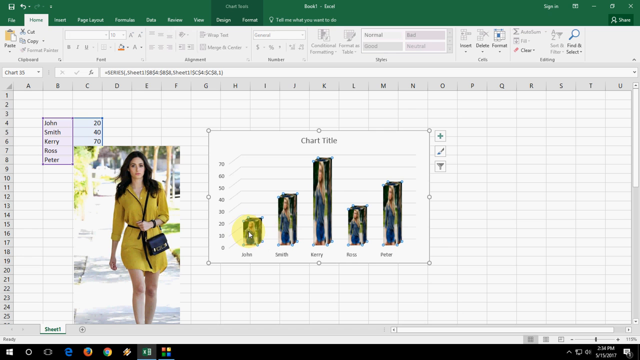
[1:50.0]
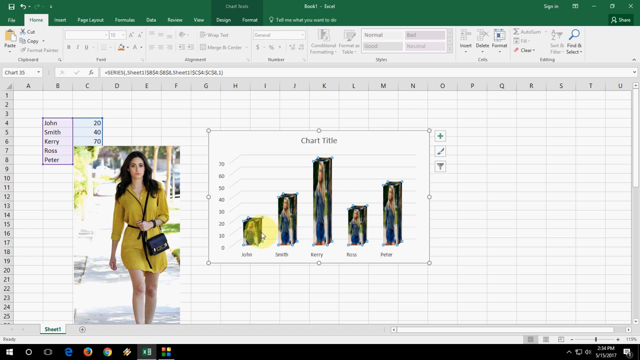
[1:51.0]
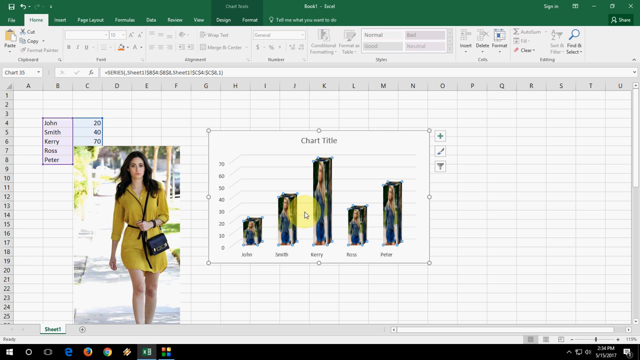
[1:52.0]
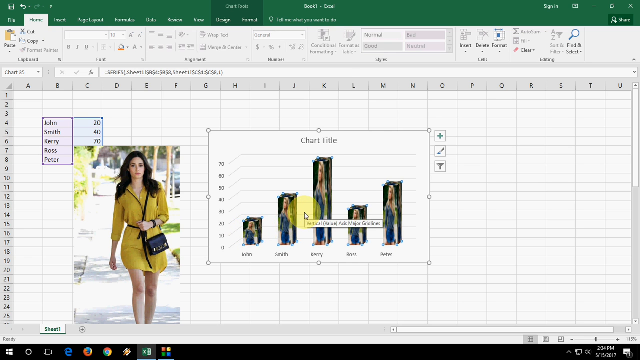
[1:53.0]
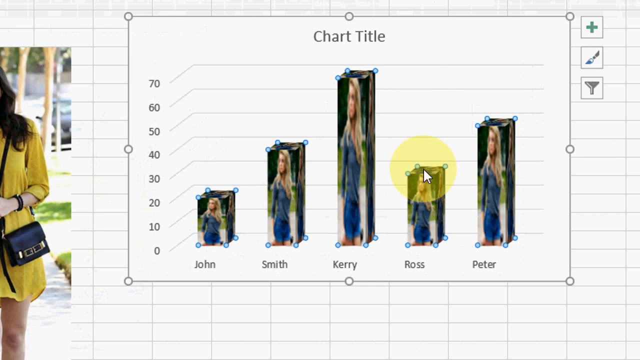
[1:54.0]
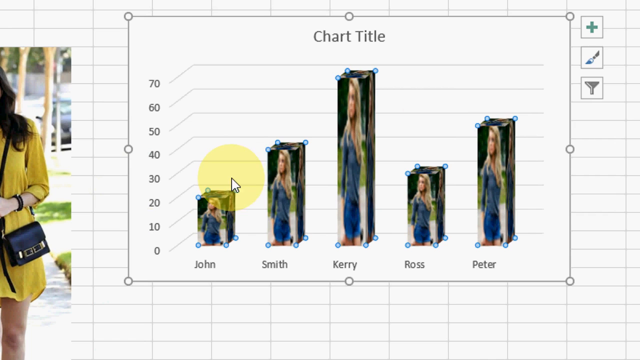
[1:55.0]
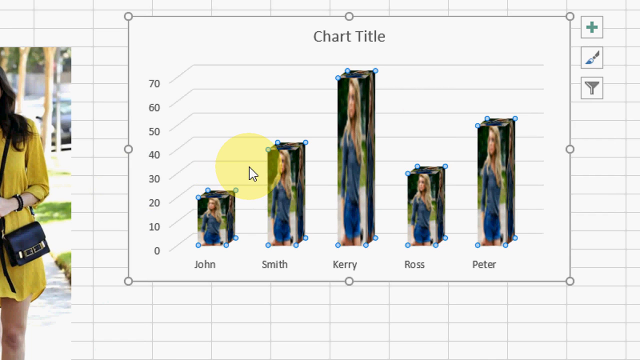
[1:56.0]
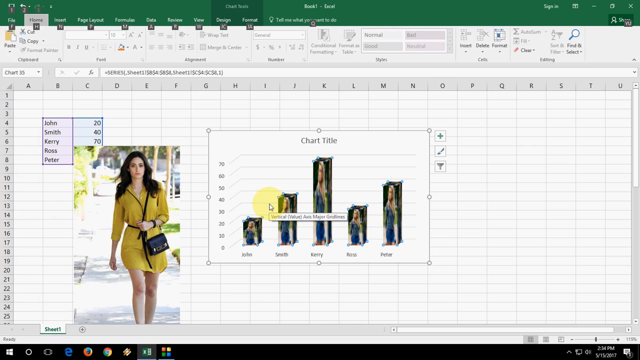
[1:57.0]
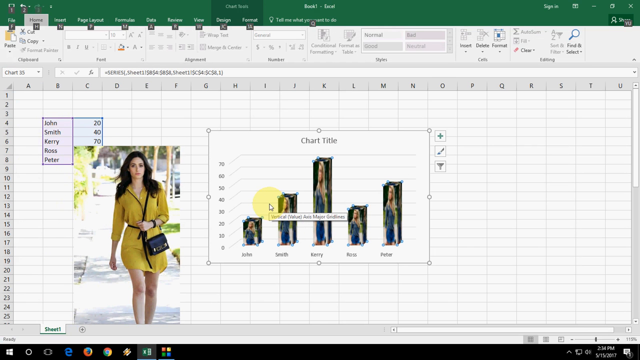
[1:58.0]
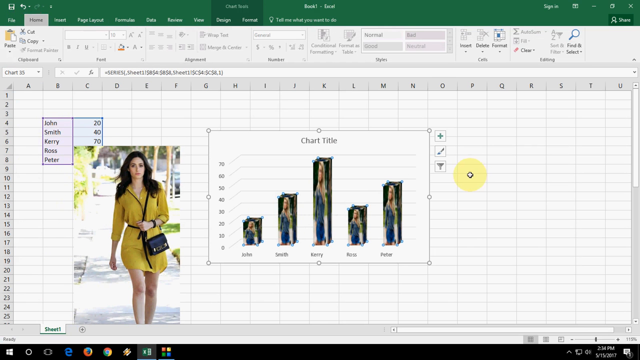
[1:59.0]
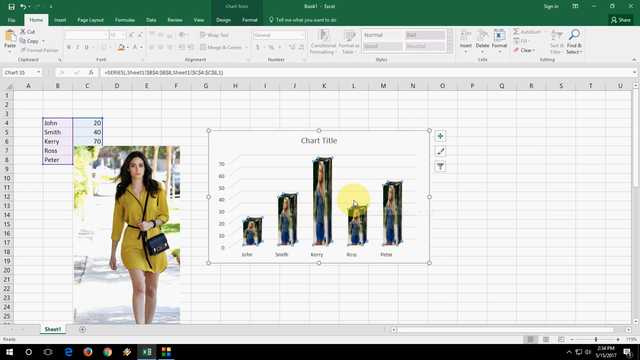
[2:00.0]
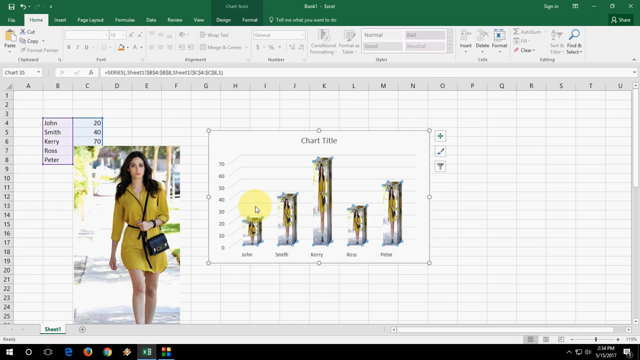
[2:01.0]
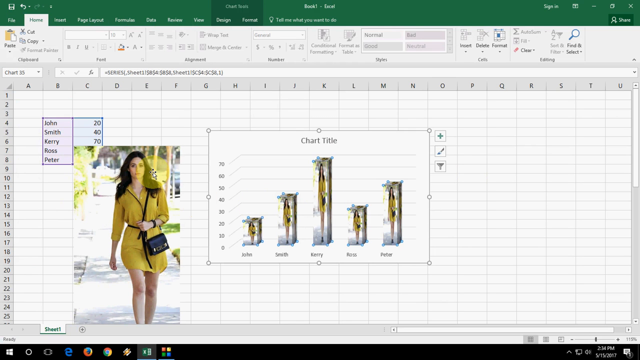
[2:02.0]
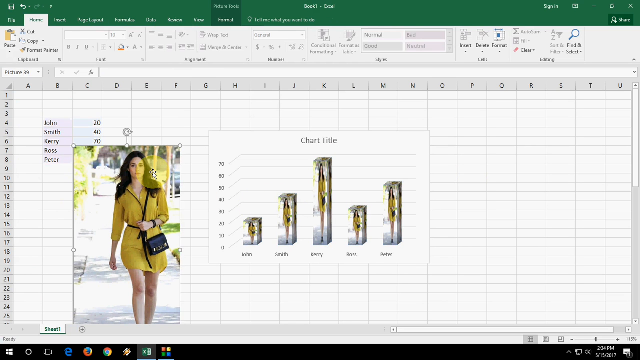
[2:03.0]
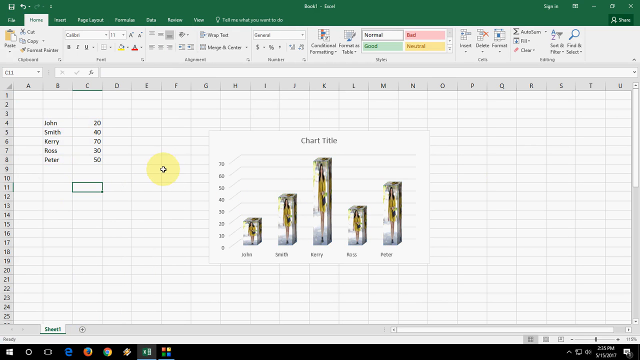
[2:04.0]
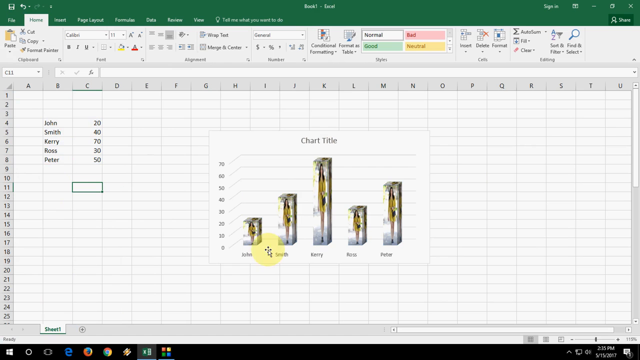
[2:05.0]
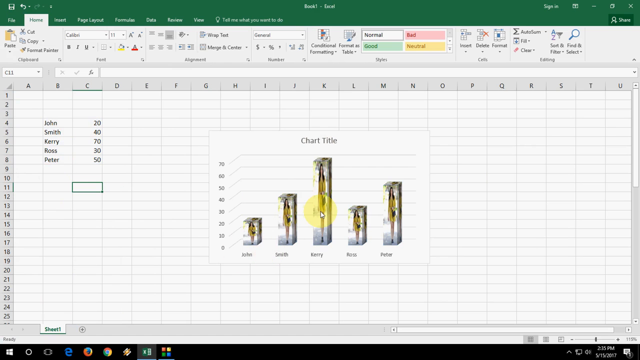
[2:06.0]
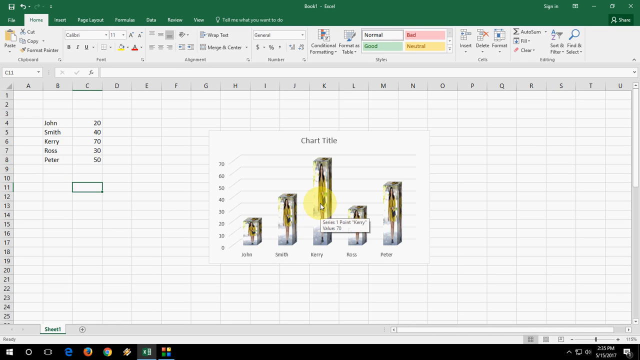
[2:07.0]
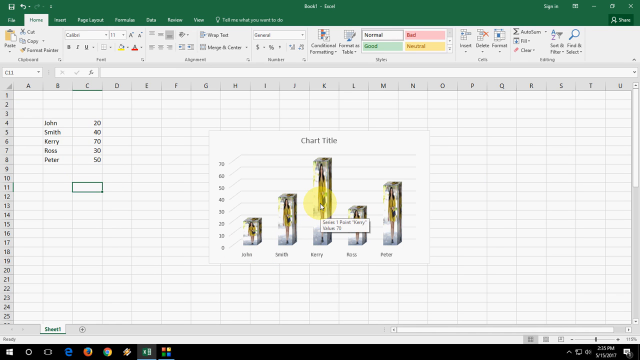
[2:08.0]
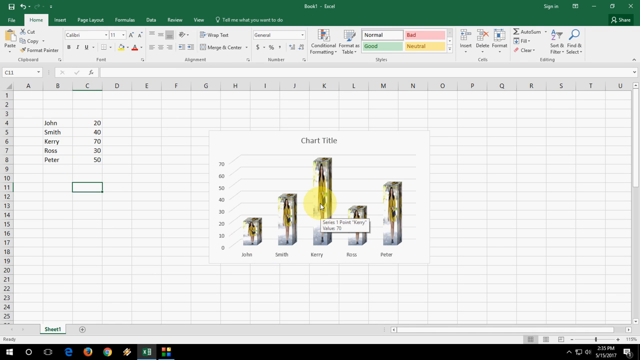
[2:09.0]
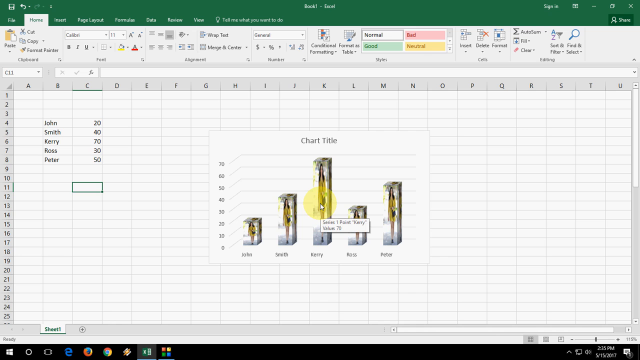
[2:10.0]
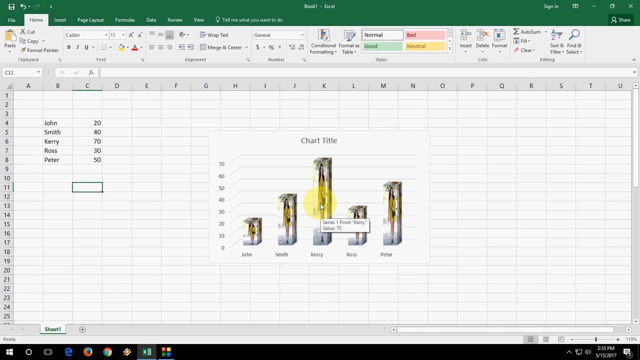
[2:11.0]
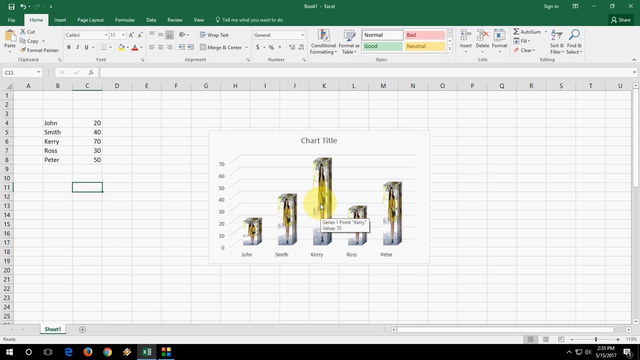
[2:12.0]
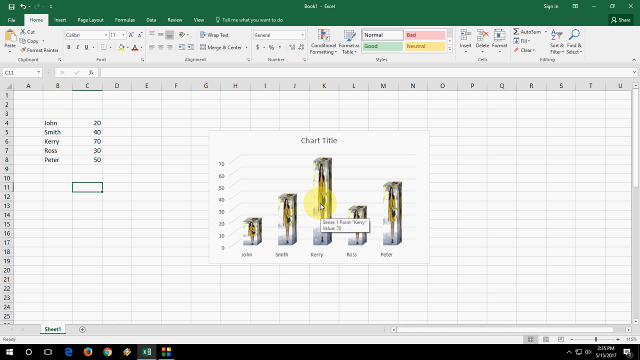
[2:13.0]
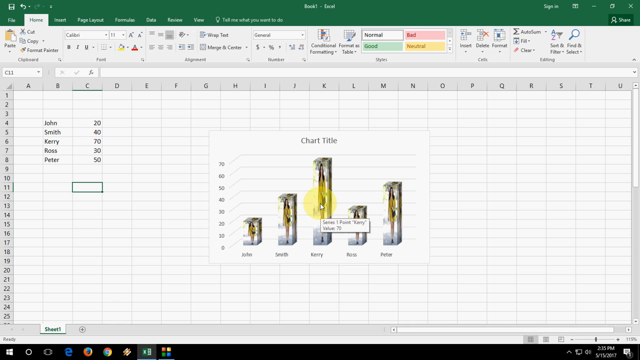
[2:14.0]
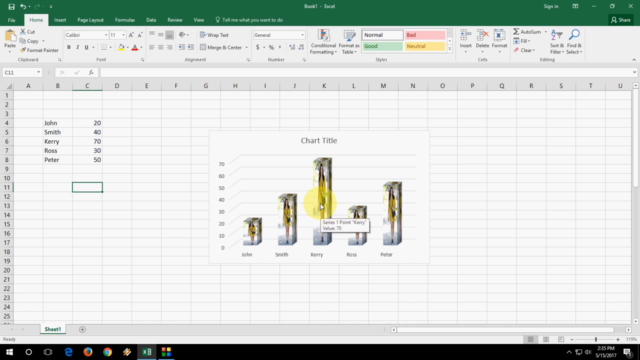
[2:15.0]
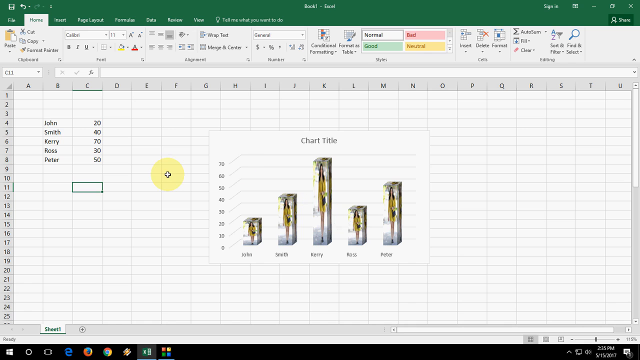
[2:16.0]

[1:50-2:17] A Windows Excel spreadsheet is on a Windows PC, with entries that are names and numbers. The columns along the top are labeled A to U, and the rows on the left are numbered 1 to 25. Boxes 4C to 8C hold, from top to bottom, John 20, Smith 40, Kerry 70, Ross 30 and Peter 50. In the middle is a pop-up box for the chart title, which also has the names from left to right and numbers from 0 to 70 from bottom to top; each name's column on the chart matches its number in the spreadsheet. A cursor with a yellow halo grabs and drags what appear to be photographs from the PC's hard drive and adds them to the chart, inserting them from the PC's photographs.